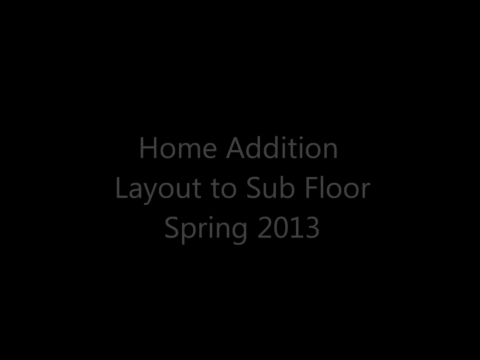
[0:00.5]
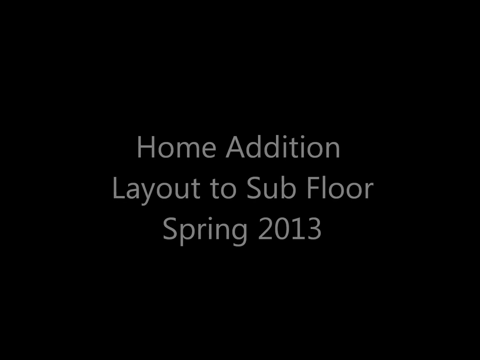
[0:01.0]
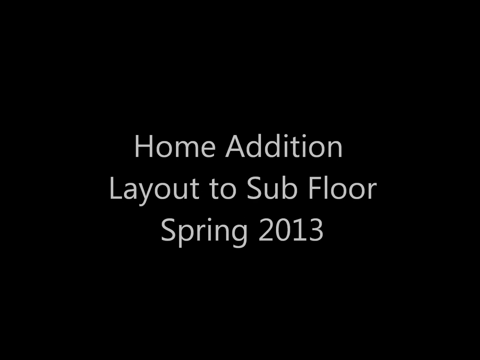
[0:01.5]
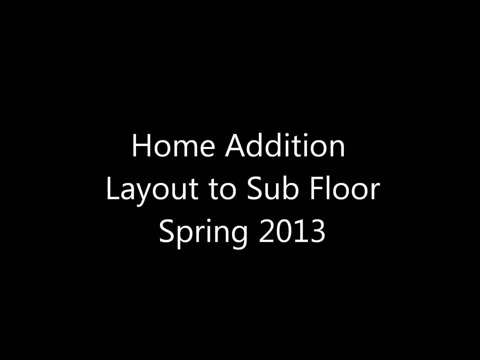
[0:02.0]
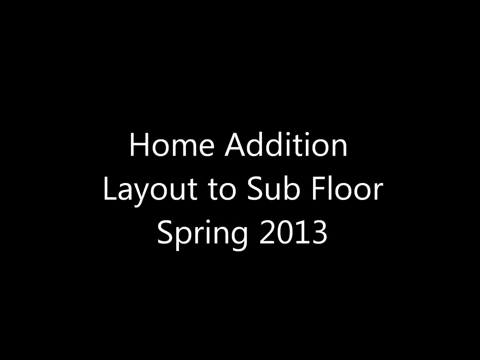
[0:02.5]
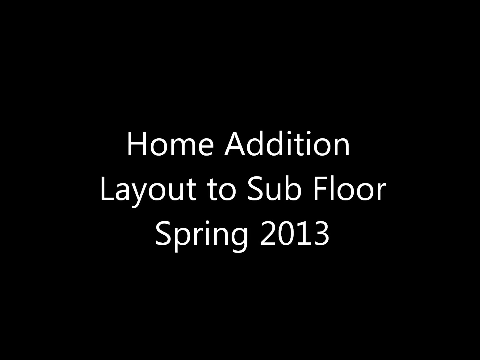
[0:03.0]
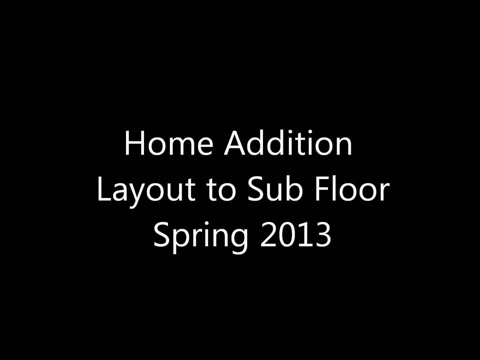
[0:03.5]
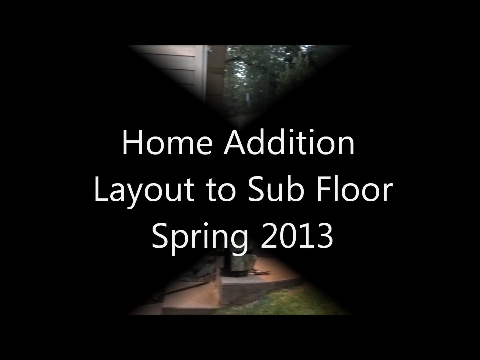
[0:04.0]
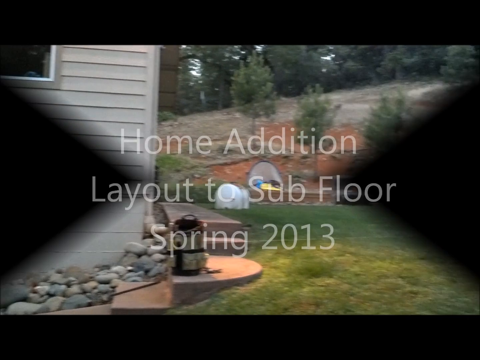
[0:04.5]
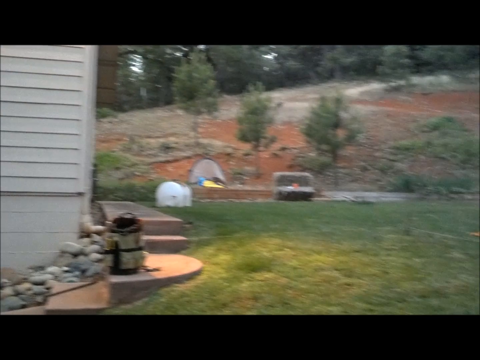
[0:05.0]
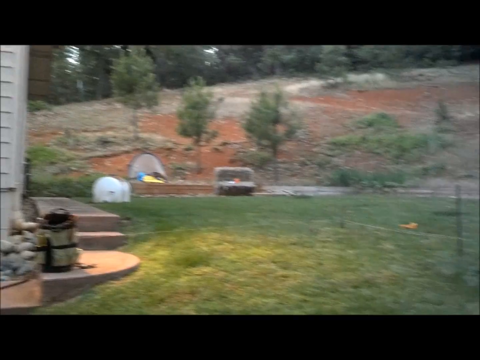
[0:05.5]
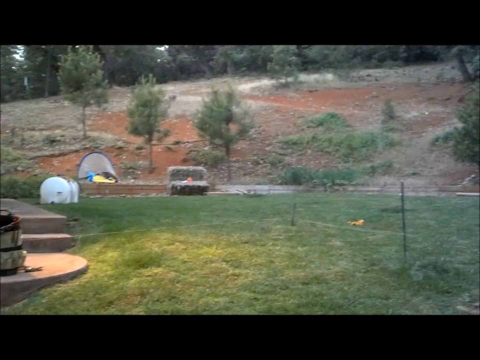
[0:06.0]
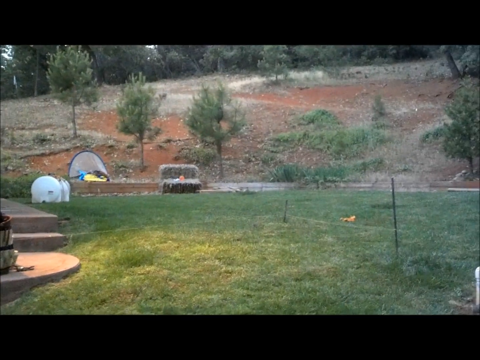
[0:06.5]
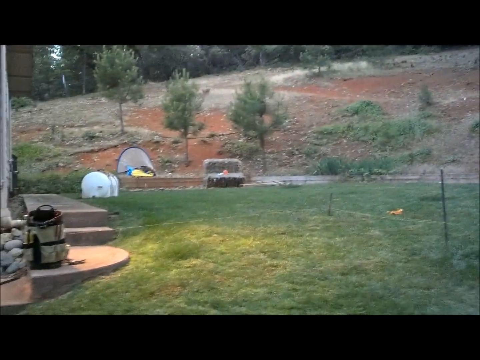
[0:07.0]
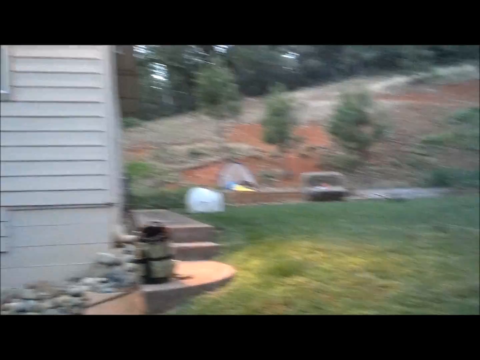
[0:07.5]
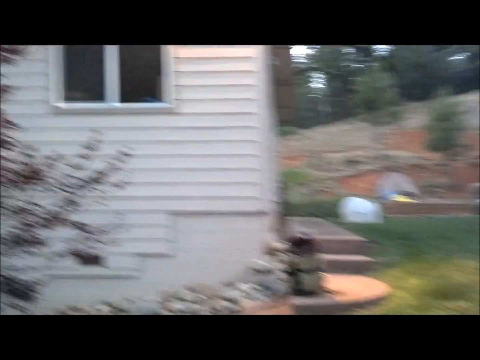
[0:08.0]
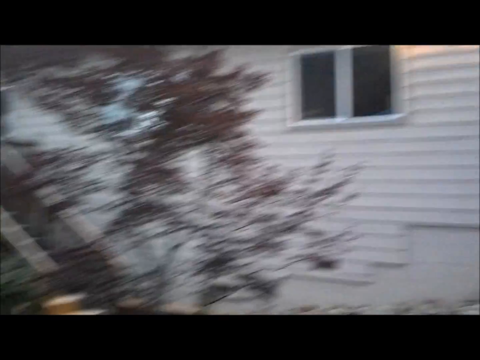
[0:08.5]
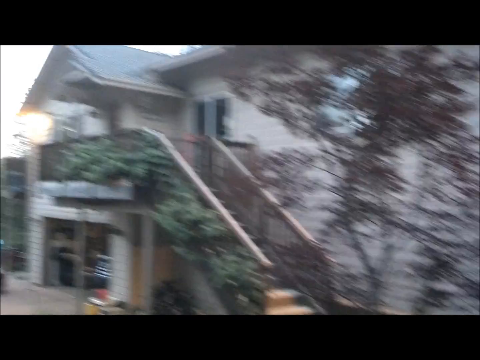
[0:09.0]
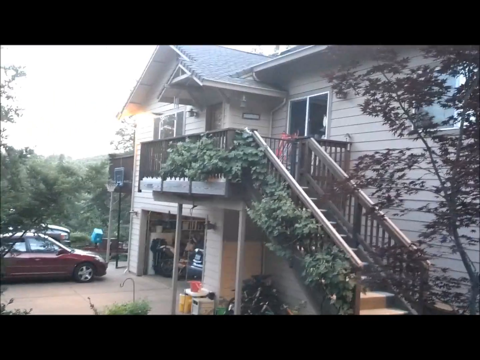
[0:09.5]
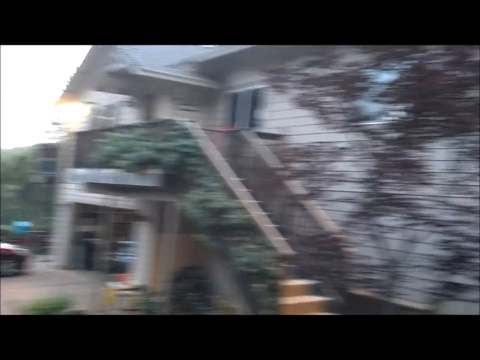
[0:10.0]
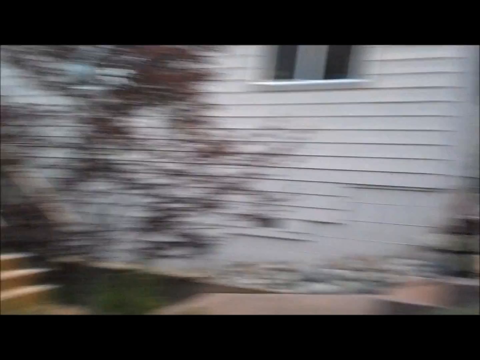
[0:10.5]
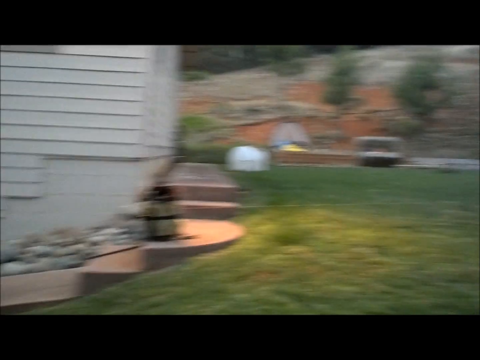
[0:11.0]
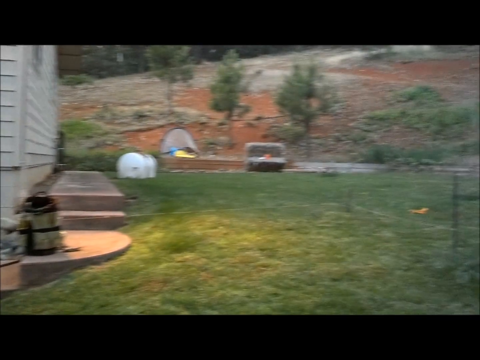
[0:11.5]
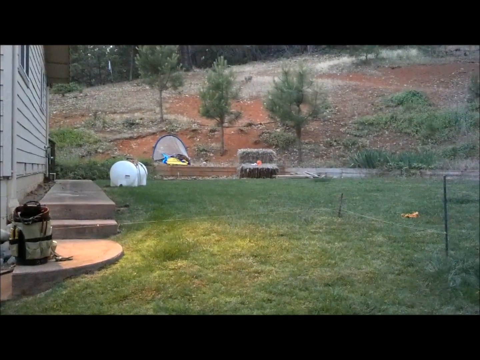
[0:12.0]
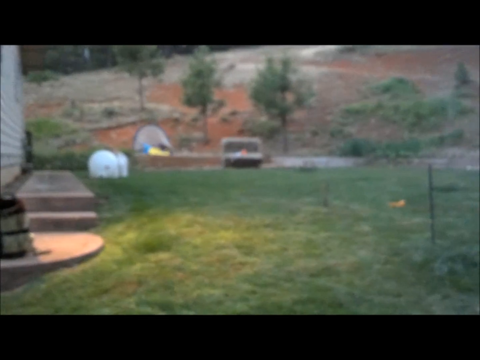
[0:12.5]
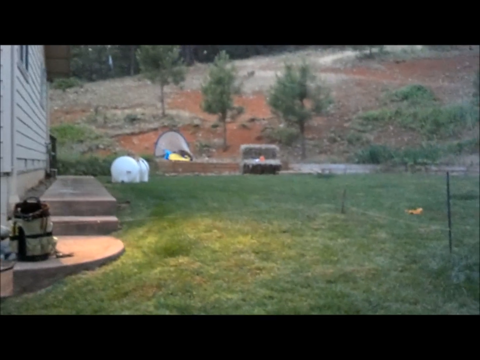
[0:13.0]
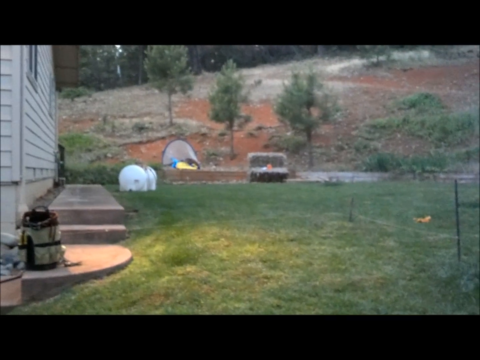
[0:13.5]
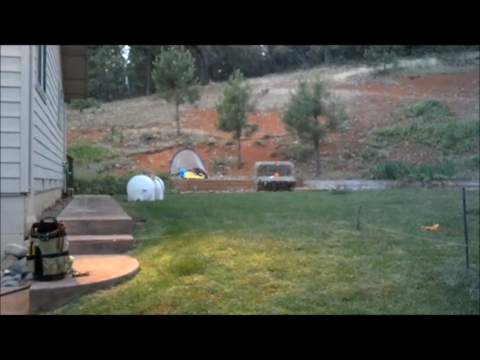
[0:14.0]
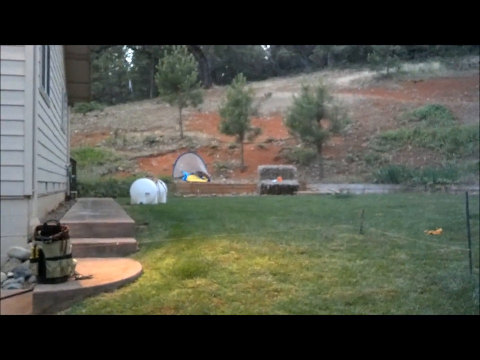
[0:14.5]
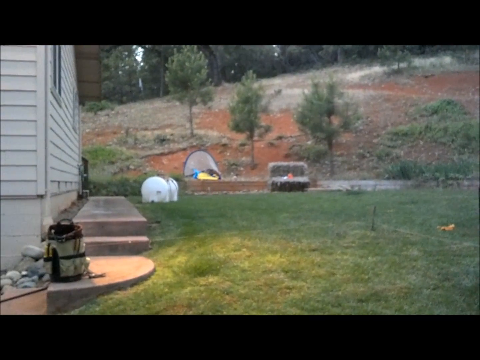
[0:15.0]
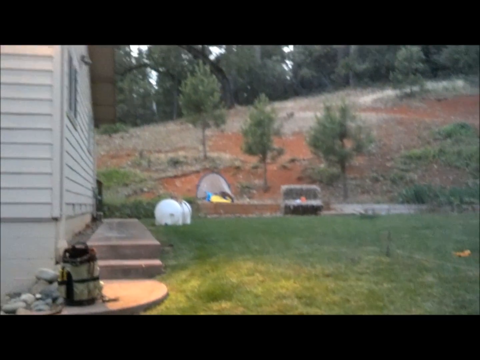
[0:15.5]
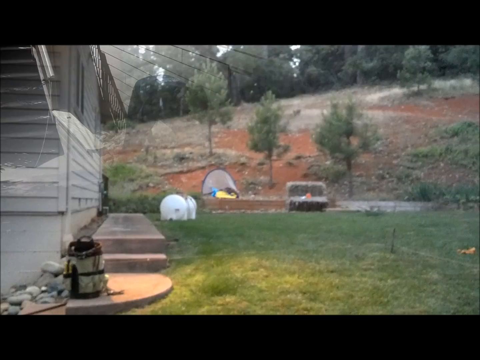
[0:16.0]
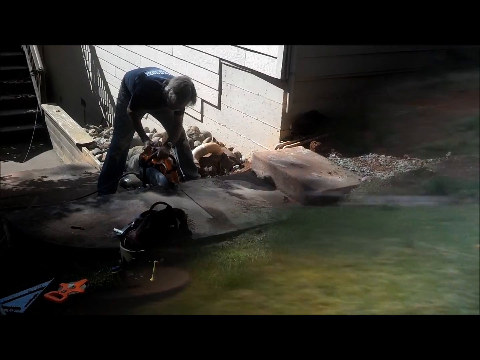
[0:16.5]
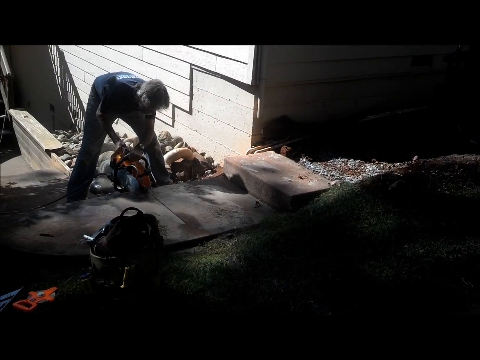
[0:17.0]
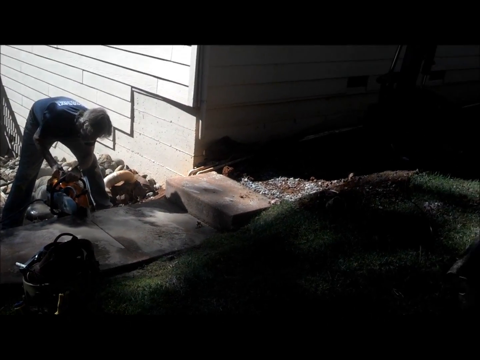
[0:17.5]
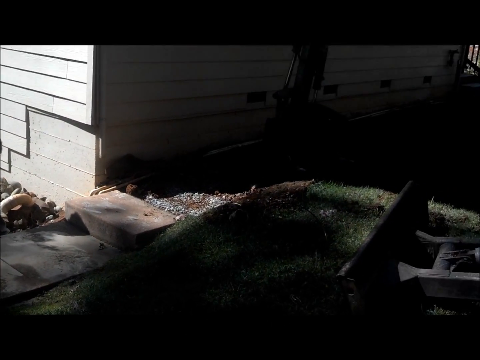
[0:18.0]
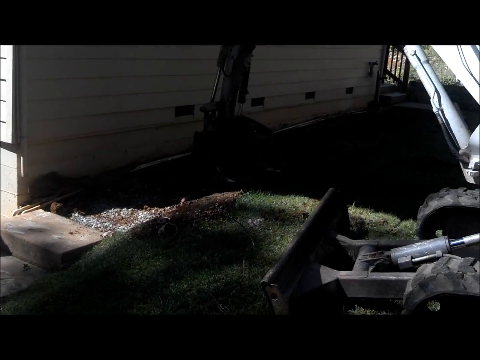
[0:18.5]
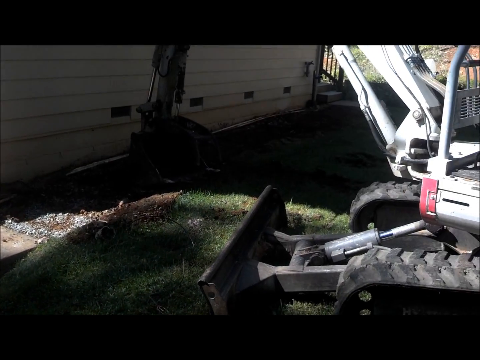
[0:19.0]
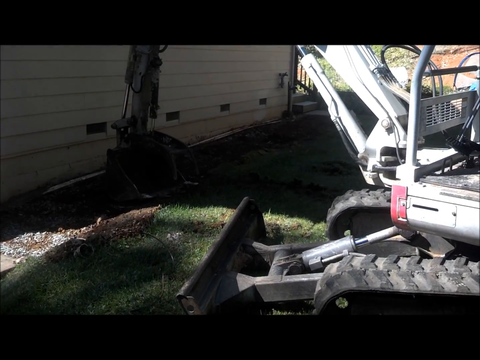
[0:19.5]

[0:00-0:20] The video opens with the text "Home Edition layout to subfloor spring 2013" in plain white lettering on black, and a black border frames the whole video instead of it filling the full size. It looks like the work of a carpenter or contractor, or possibly someone doing it themselves. A big white house sits on a decent-sized yard with green grass. A man of unclear age appears to be about to start, and there is some heavy machinery. Stairs go up to the front door of the house, and there is a garage with living space above it.